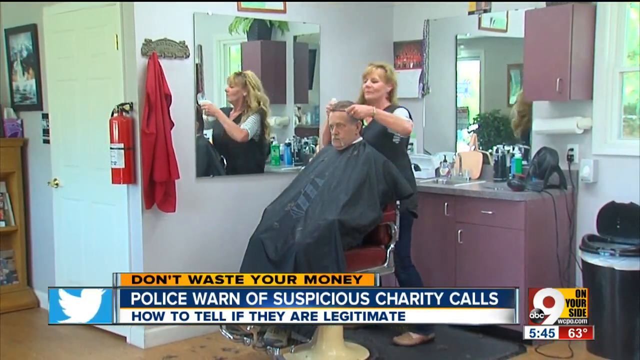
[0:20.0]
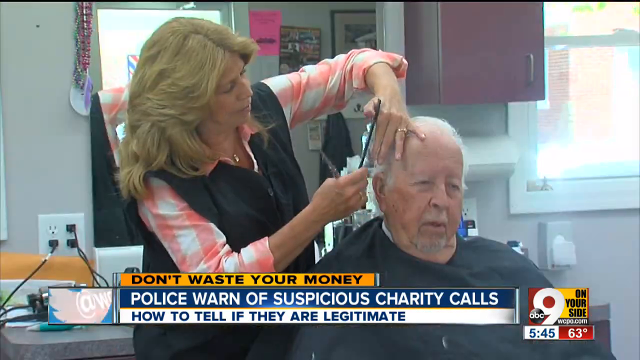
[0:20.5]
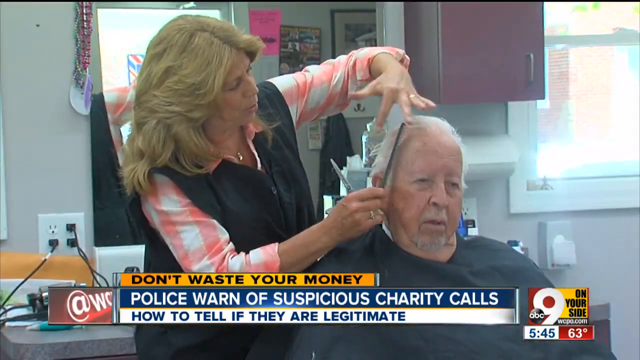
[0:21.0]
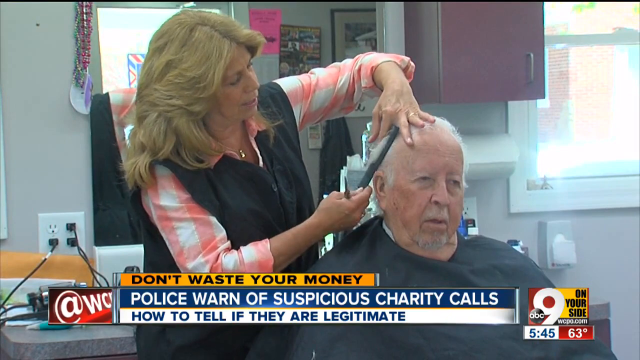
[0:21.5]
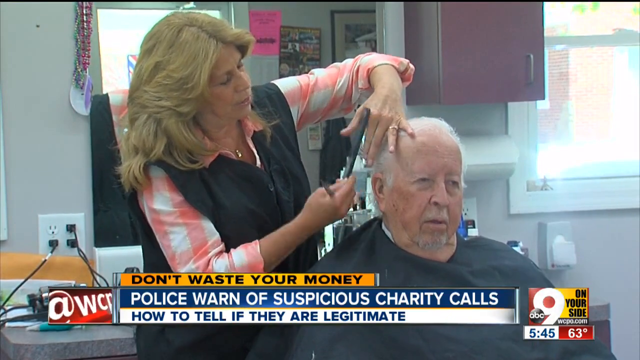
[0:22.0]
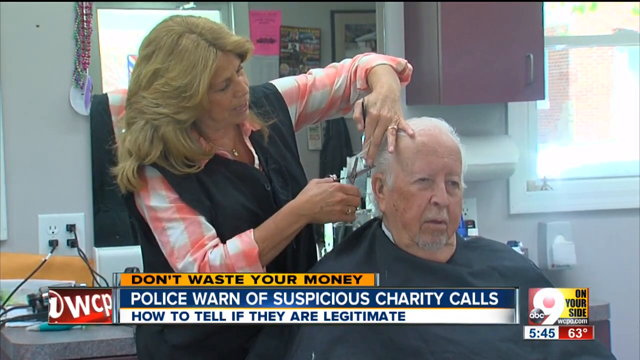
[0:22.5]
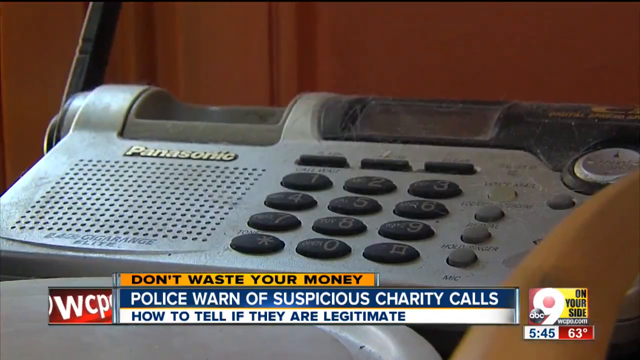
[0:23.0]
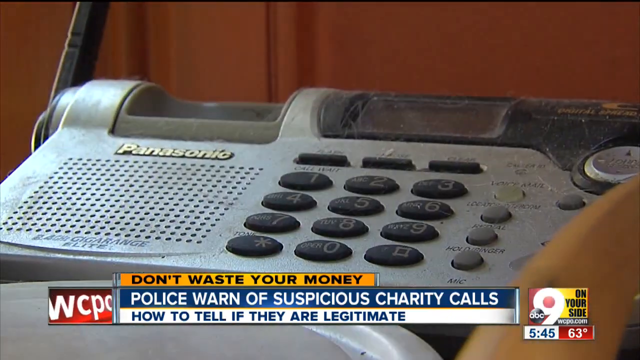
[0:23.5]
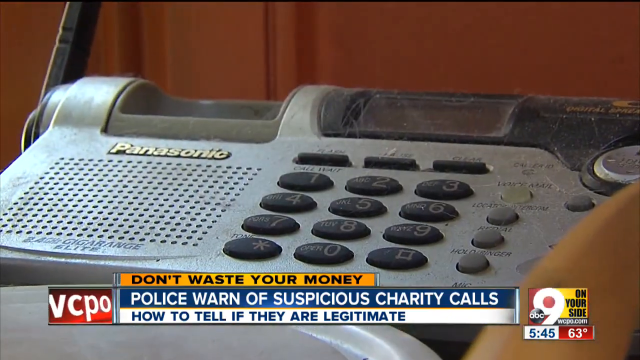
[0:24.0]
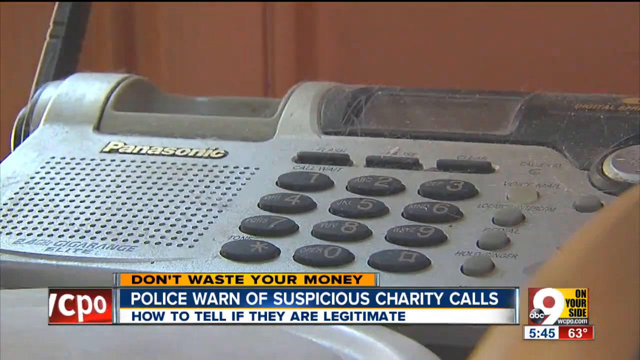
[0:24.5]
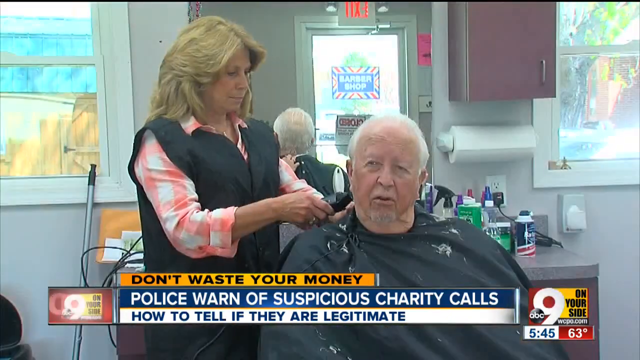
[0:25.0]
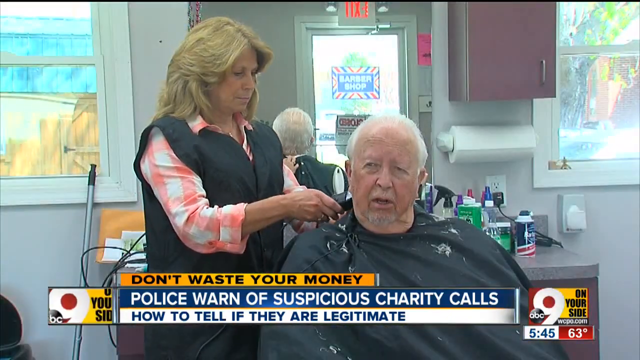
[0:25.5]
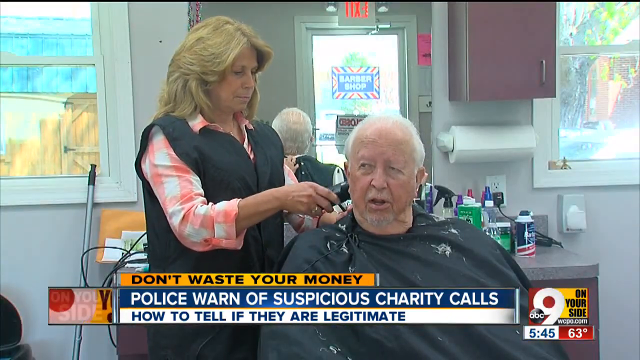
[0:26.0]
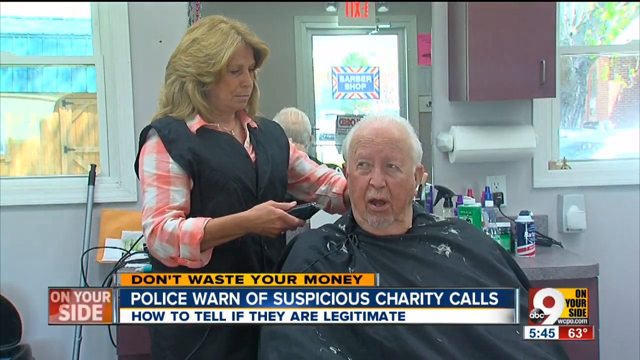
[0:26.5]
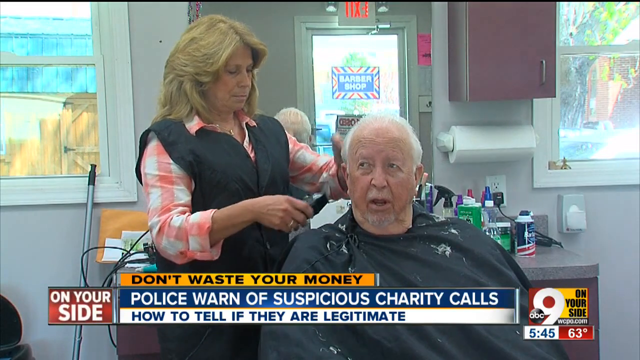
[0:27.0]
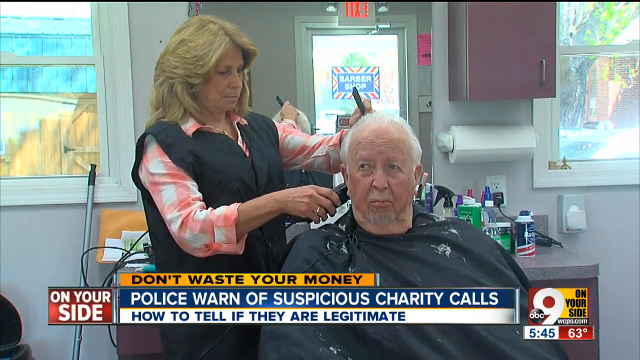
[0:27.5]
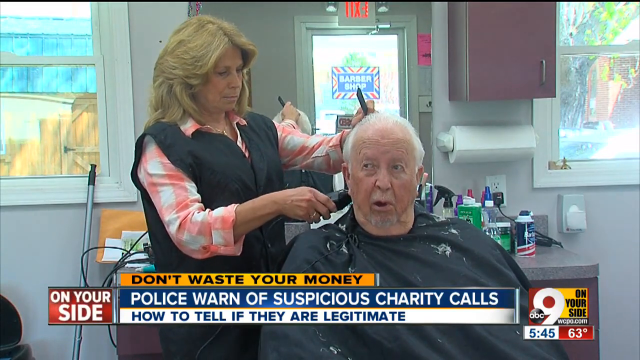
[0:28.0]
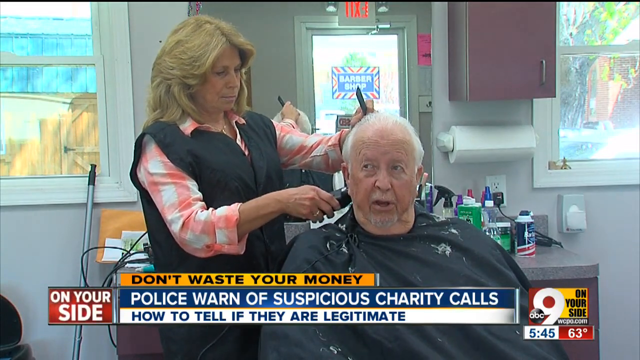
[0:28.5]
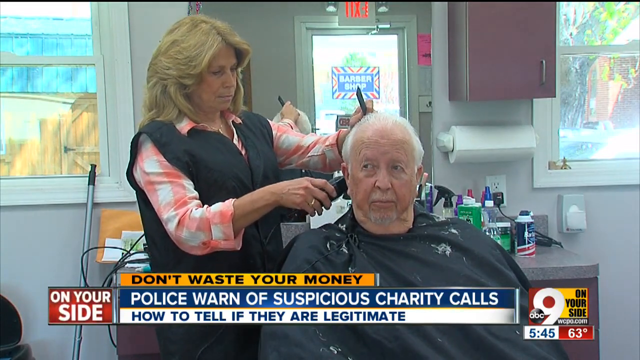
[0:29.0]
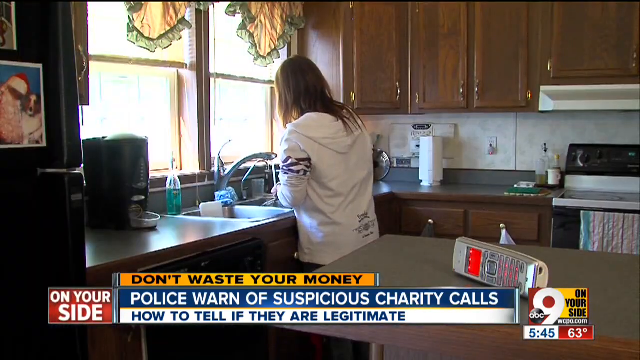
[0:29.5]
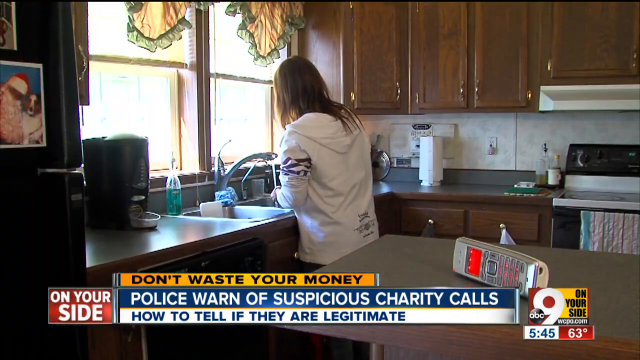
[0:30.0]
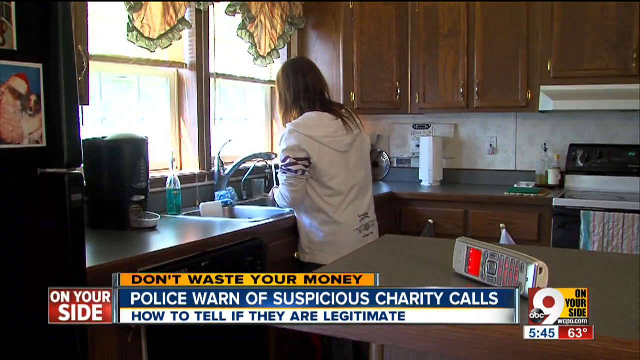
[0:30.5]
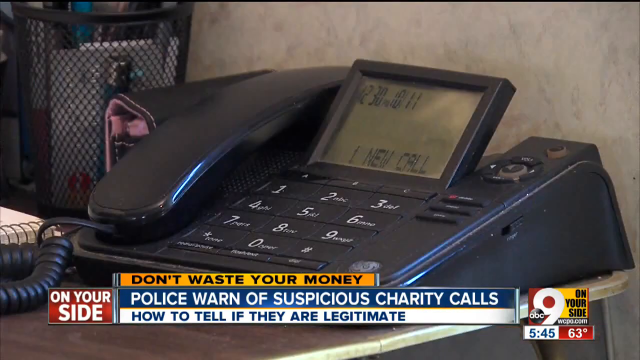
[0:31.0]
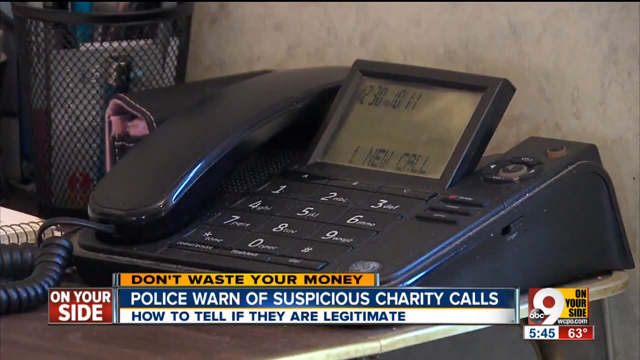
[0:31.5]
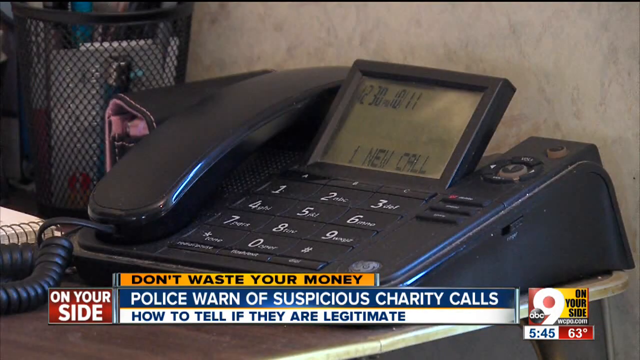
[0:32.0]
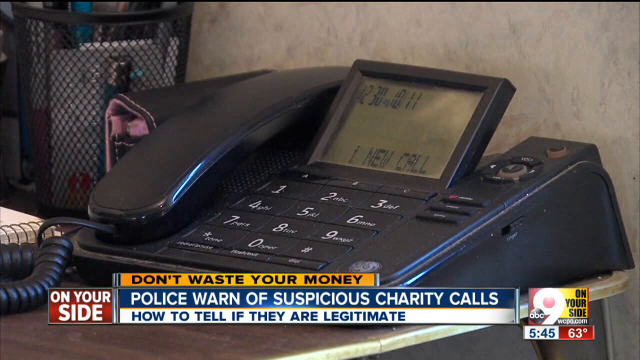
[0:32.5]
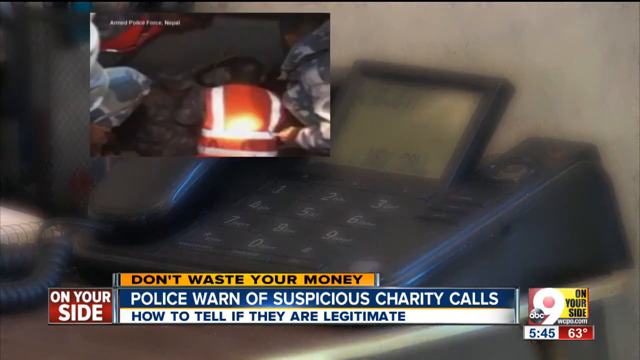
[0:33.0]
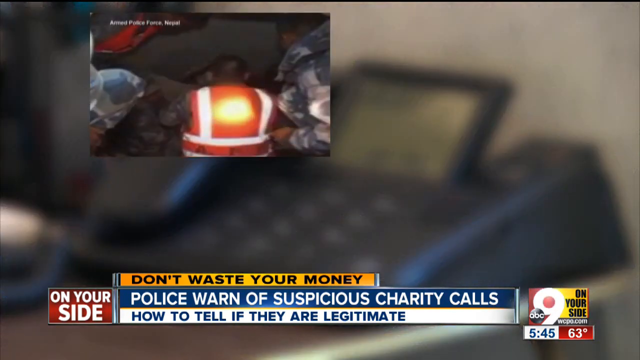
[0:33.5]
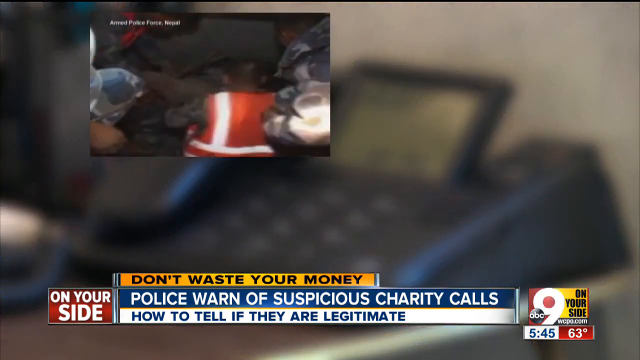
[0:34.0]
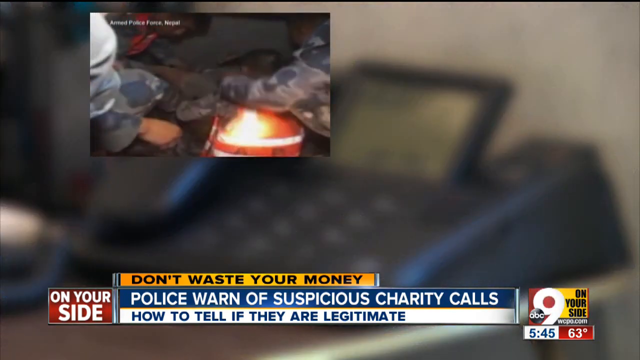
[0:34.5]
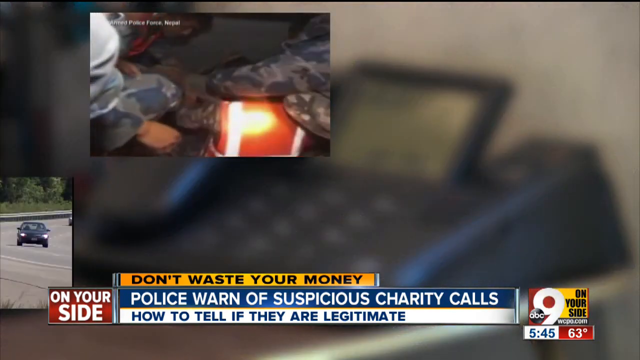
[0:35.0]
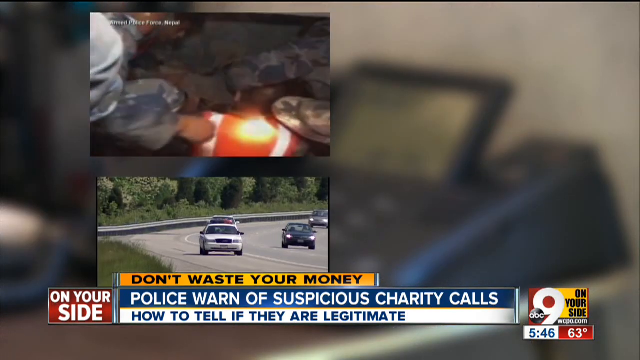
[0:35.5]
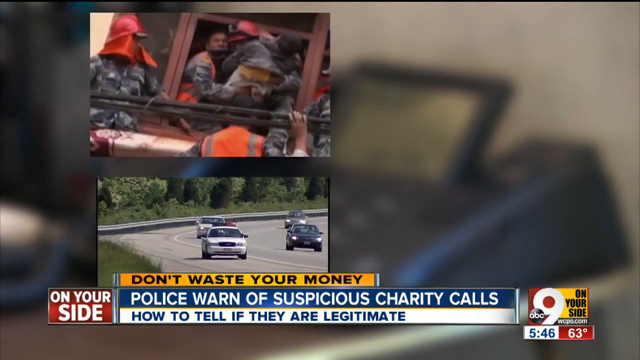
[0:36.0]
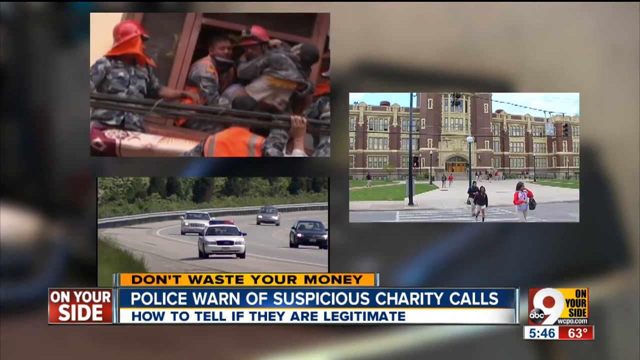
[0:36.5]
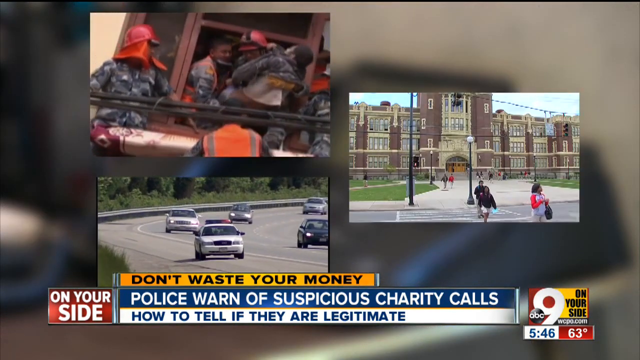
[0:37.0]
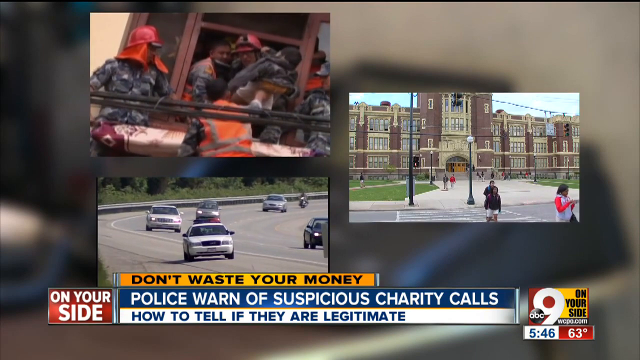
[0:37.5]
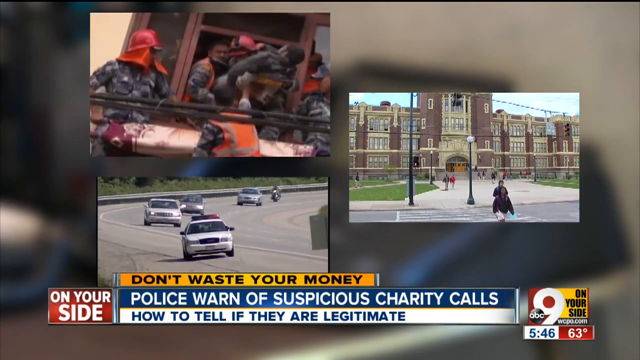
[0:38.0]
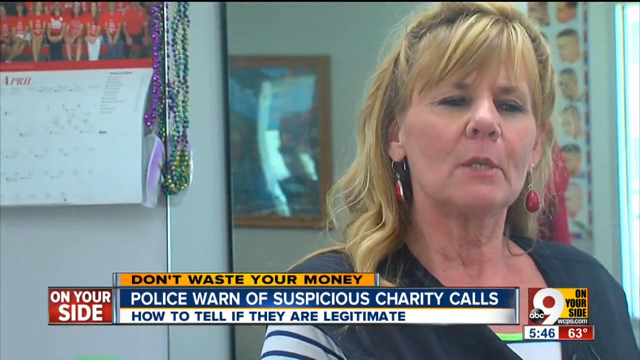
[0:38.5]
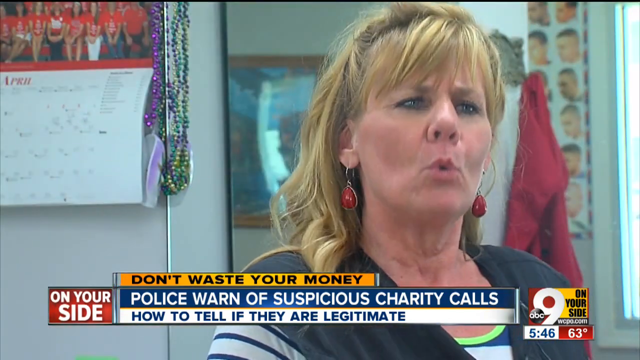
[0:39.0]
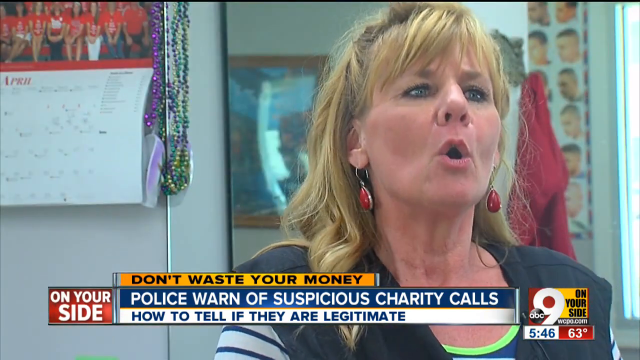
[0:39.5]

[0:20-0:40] The lady is white with a blonde hairstyle and wears a pullover bomber jacket and a pink and white checkered long-sleeve shirt. She seems to be a hairdresser, and the man whose hair she is cutting could be an old man: his hair is gray, and his eyebrows also seem to be gray. They talk while she clips his hair. The video then shows food, followed by a lady who seems to be in a very beautiful kitchen. A picture of a telephone follows, then cars, then soldiers. A lady who appears seems to be the same lady from the salon; she wears a white long-sleeved striped T-shirt and a bomber pullover jacket.